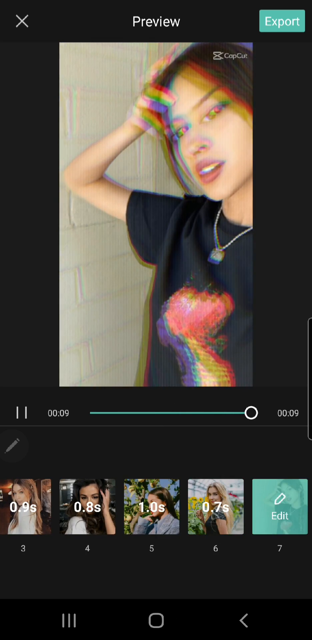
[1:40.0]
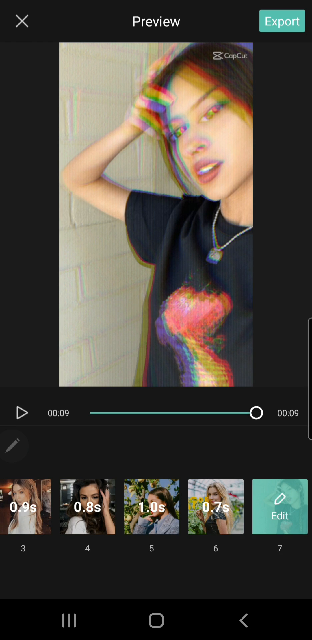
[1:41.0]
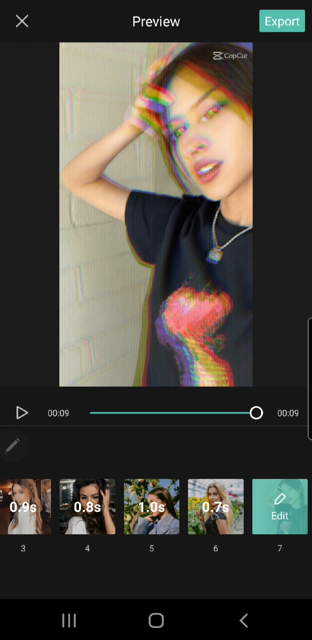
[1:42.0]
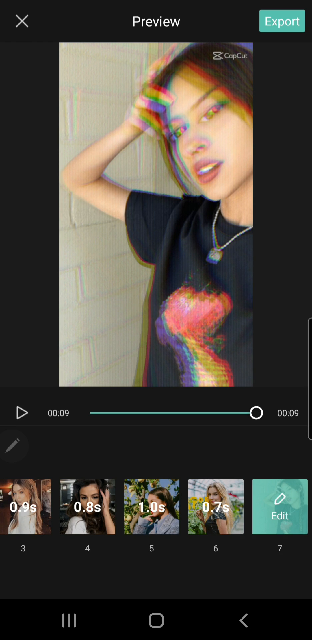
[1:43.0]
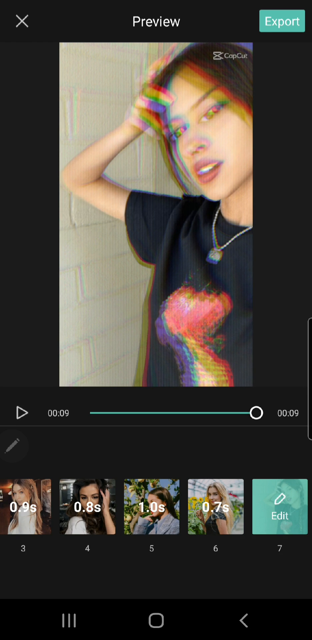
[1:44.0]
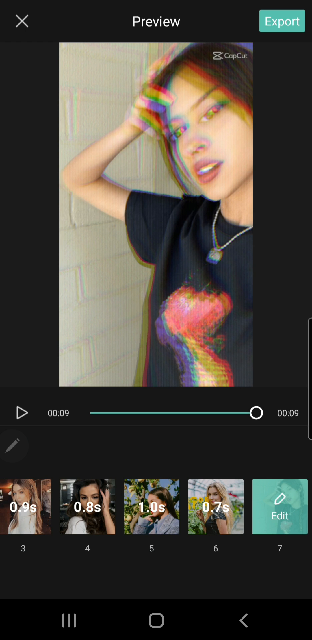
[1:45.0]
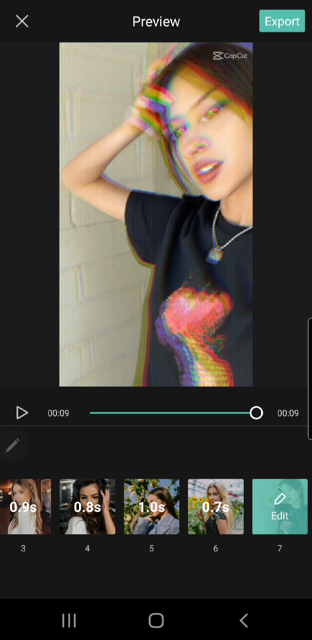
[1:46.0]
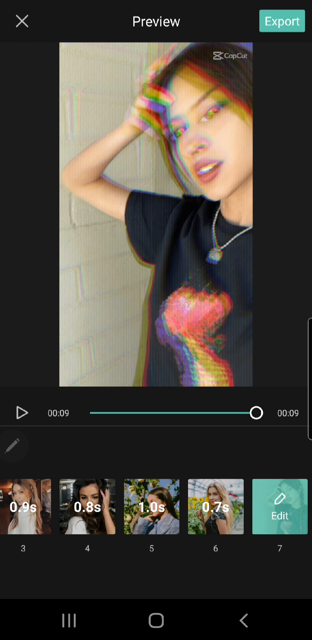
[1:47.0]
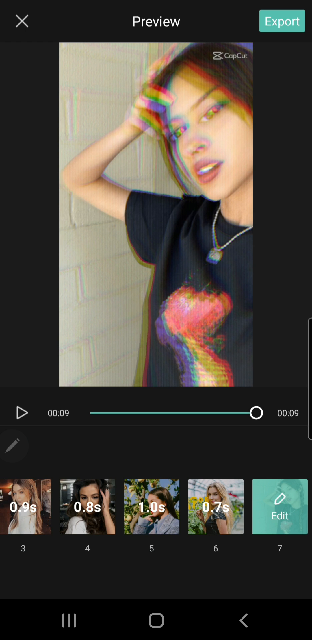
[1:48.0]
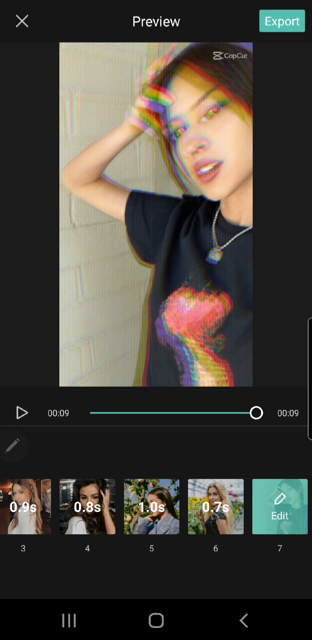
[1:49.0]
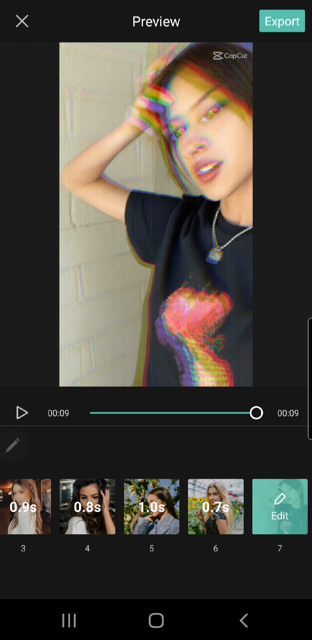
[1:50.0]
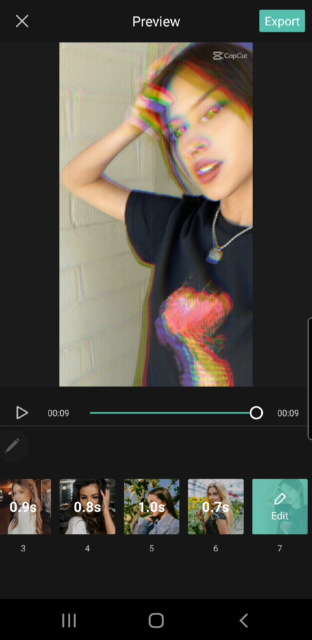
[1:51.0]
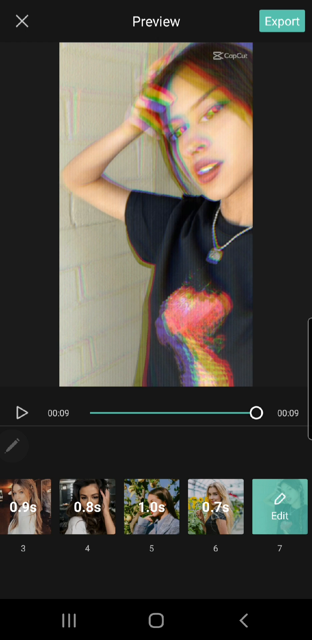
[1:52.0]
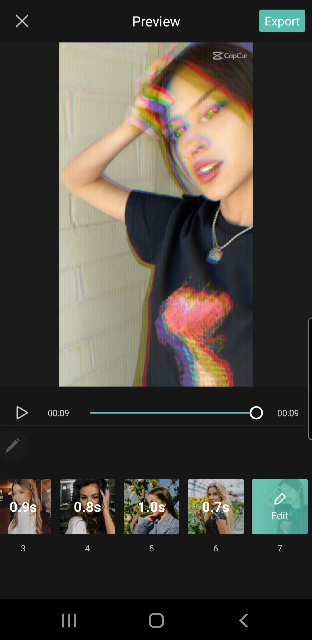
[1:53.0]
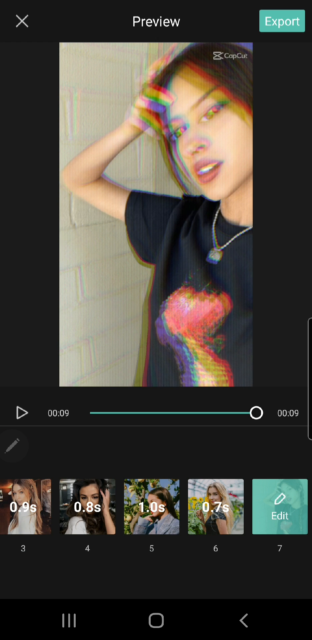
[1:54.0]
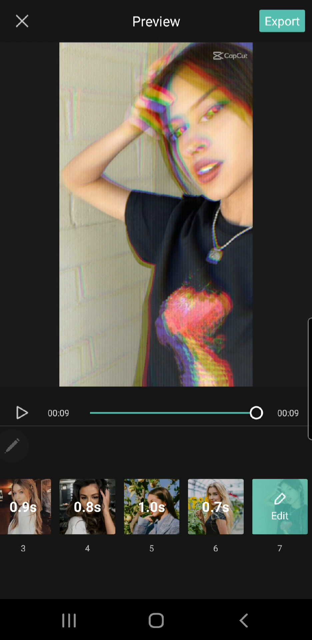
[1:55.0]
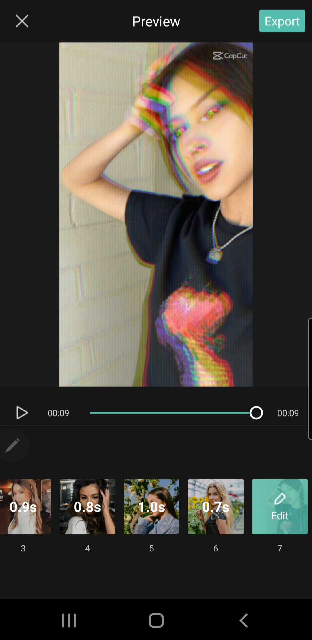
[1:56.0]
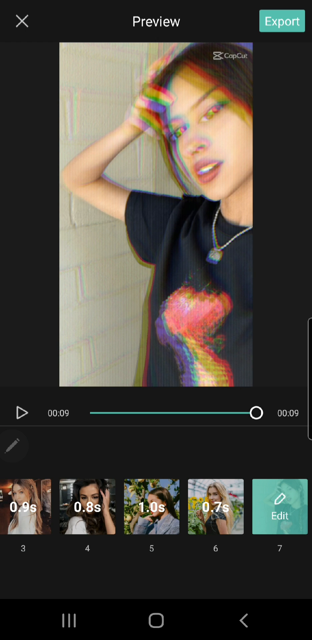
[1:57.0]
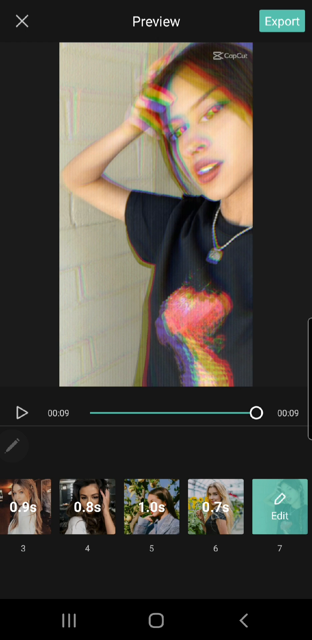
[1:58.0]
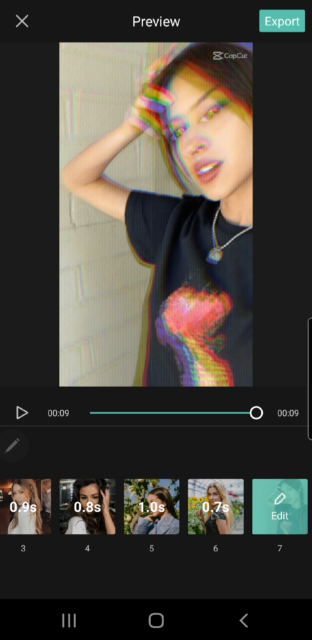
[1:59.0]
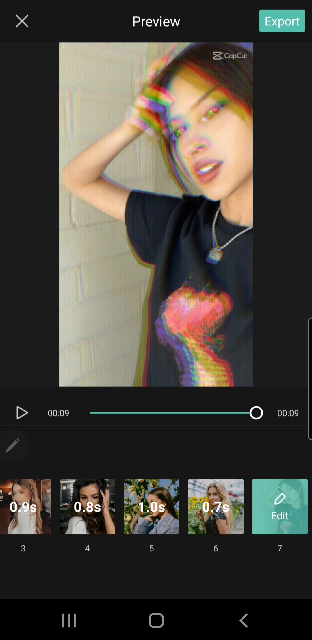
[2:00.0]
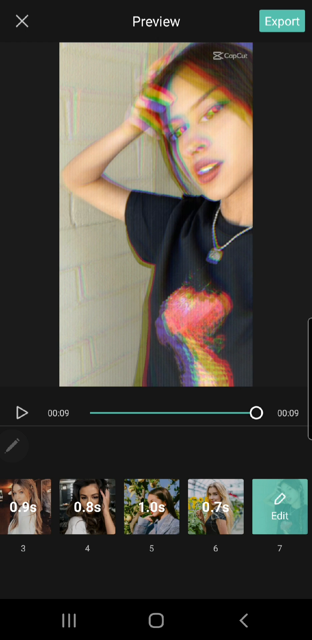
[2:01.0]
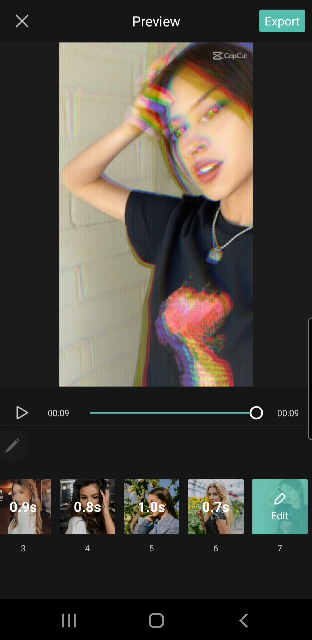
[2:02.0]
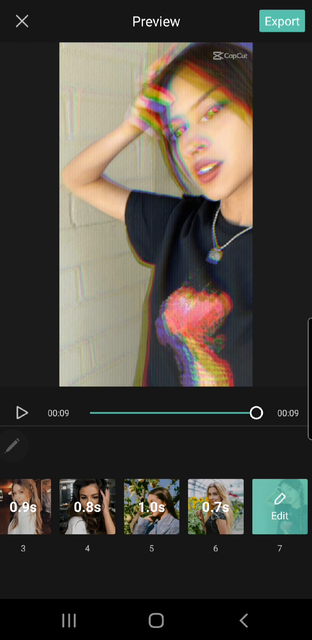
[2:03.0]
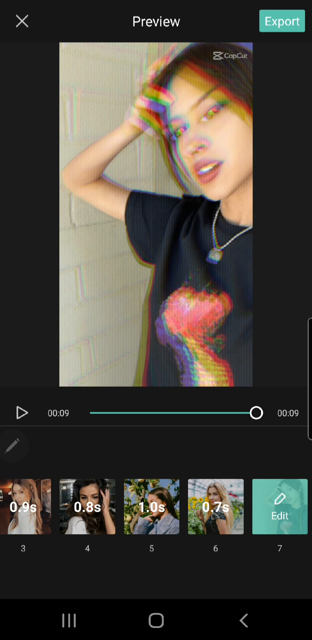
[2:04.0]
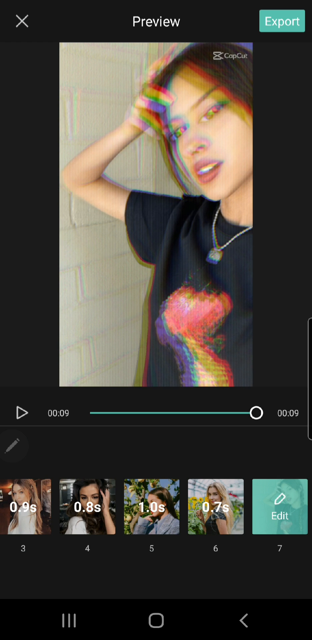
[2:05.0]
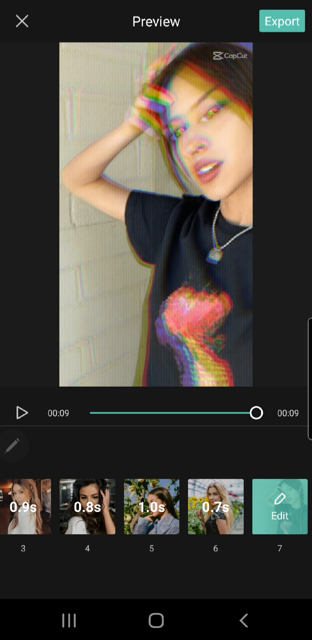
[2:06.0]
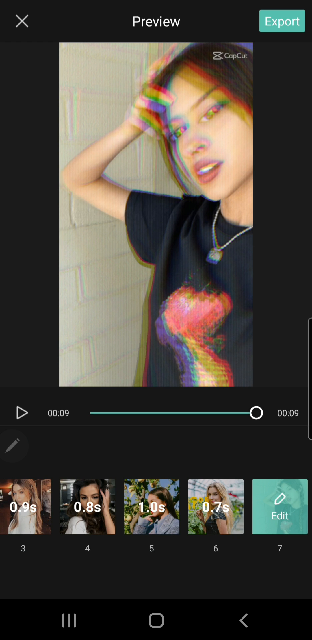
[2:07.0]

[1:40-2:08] The video finishes, and the play bar, roughly in the center of the screen, is all the way to the right; the video lasts nine seconds. The last picture still shows a woman wearing a black shirt and a necklace, her right hand on the top right side of her head and her right elbow bent. At the bottom are small thumbnails of the pictures that played in the video. At the very top it says "preview", a button in the top right corner says "export", and an X in the top left corner exits the preview. Everything is still, with no movement and no mouse pointer visible. The background color is blackened.